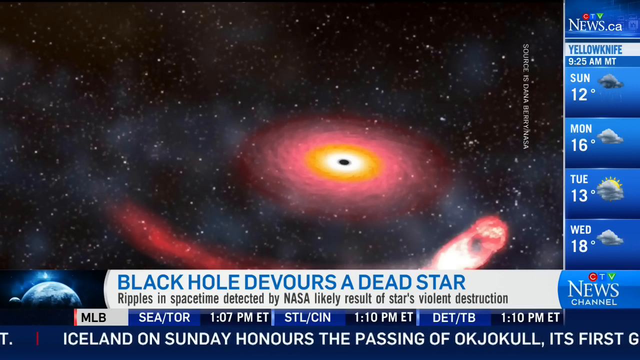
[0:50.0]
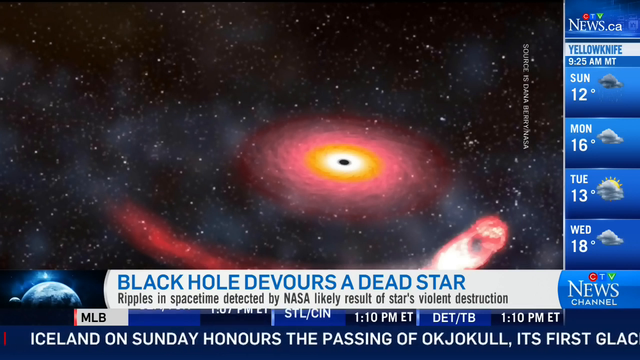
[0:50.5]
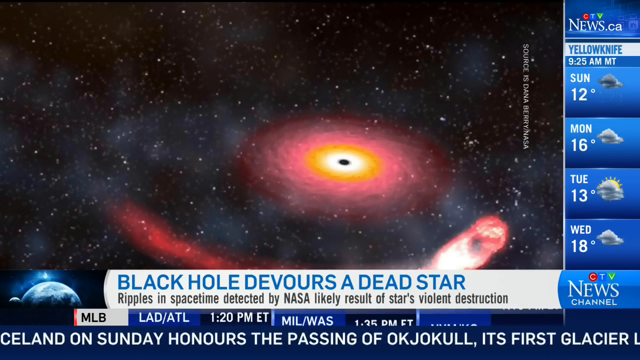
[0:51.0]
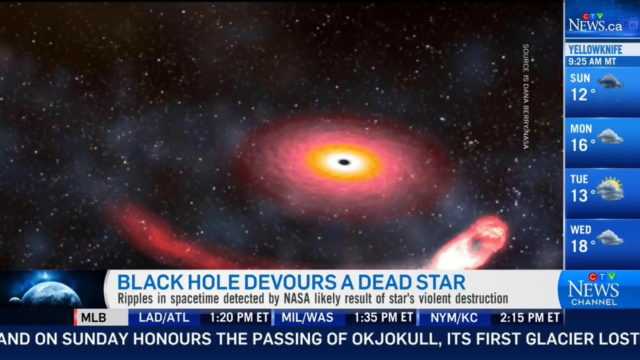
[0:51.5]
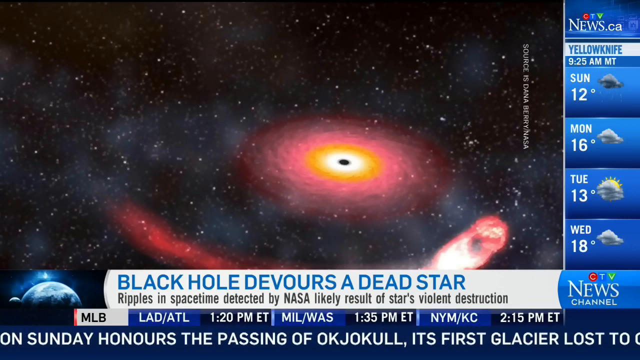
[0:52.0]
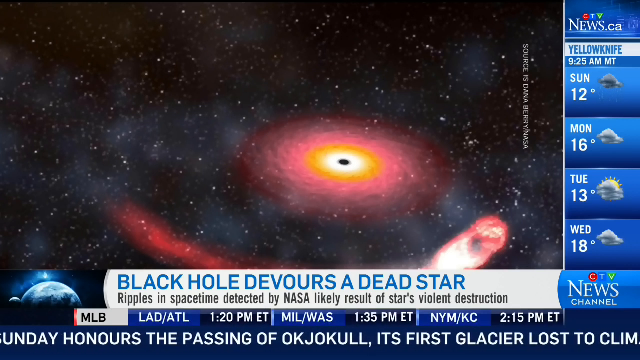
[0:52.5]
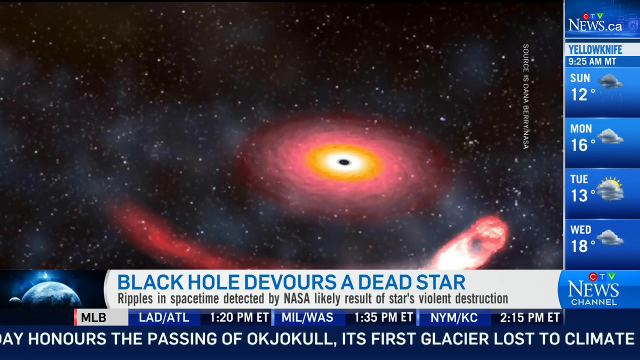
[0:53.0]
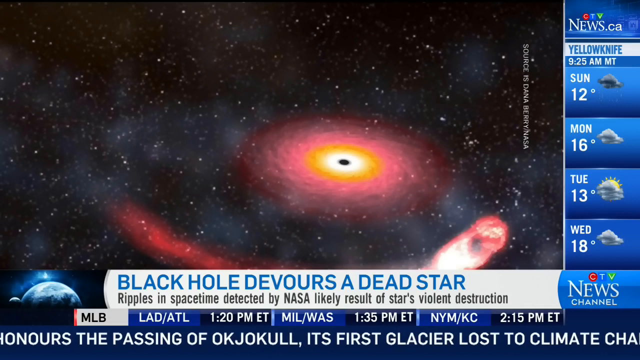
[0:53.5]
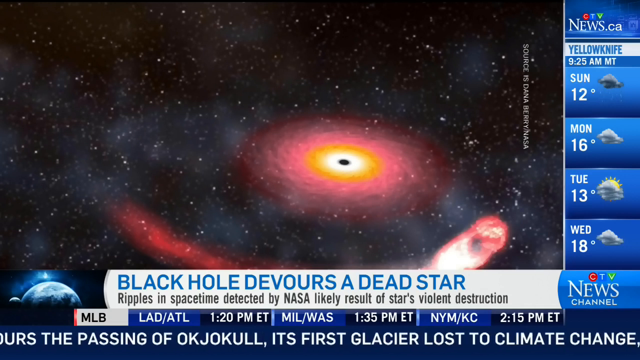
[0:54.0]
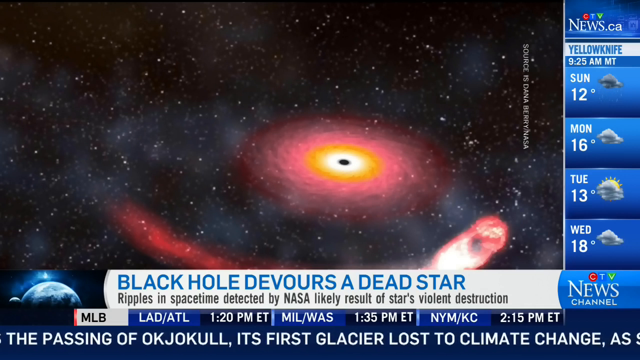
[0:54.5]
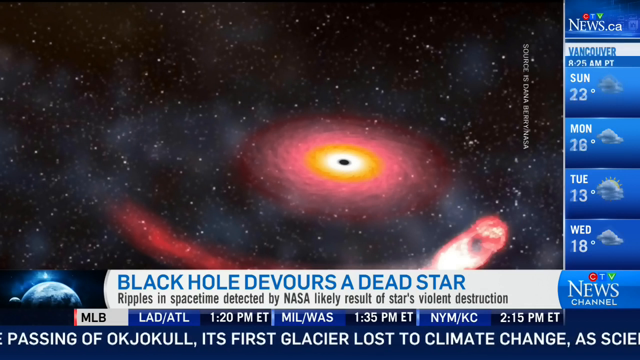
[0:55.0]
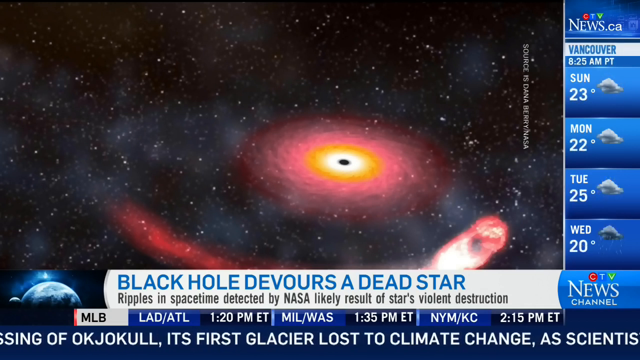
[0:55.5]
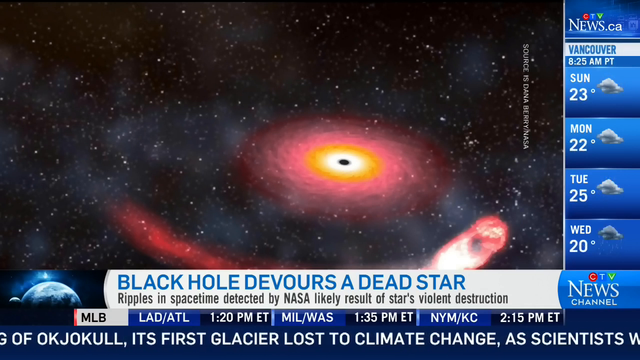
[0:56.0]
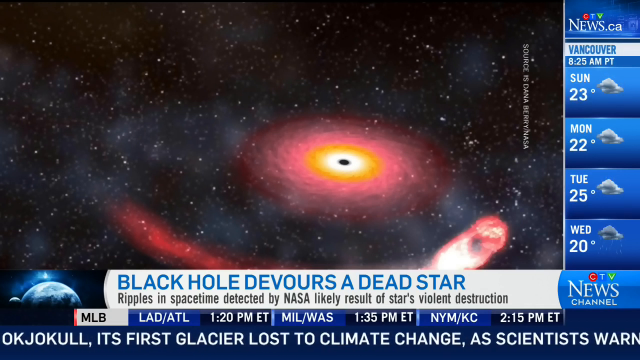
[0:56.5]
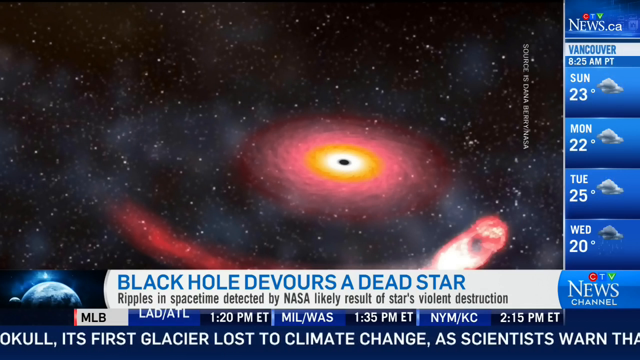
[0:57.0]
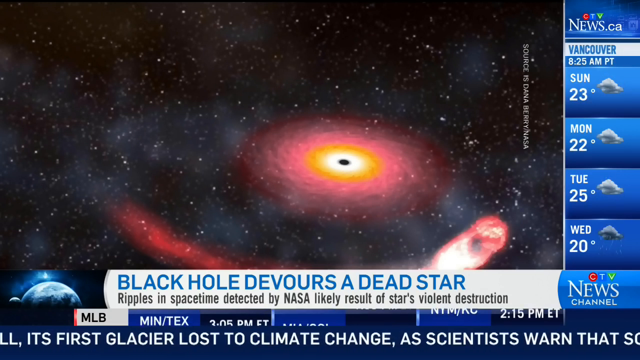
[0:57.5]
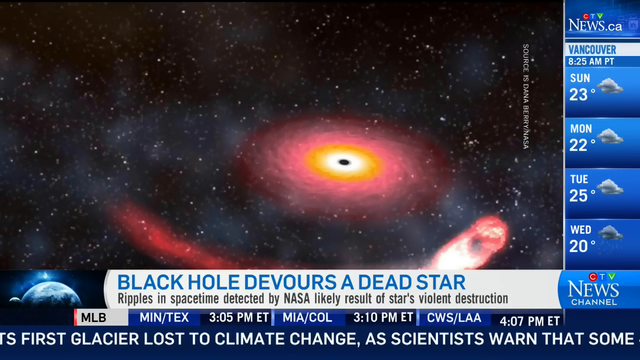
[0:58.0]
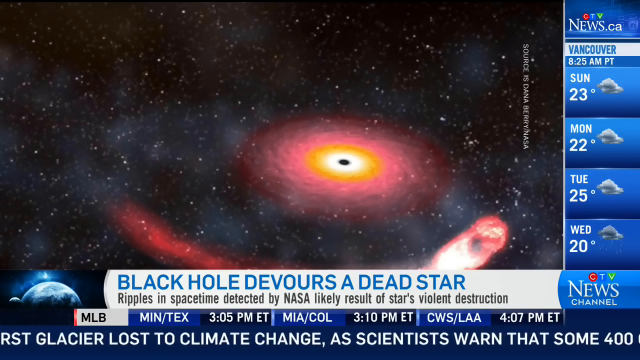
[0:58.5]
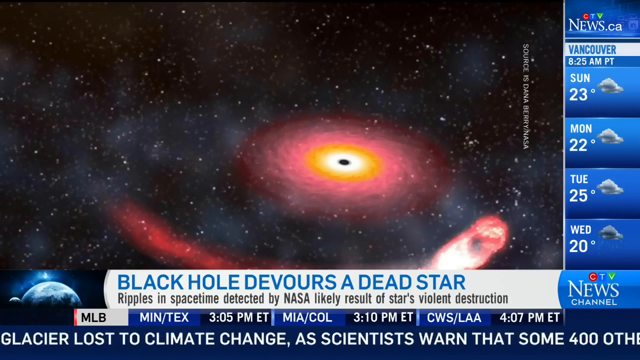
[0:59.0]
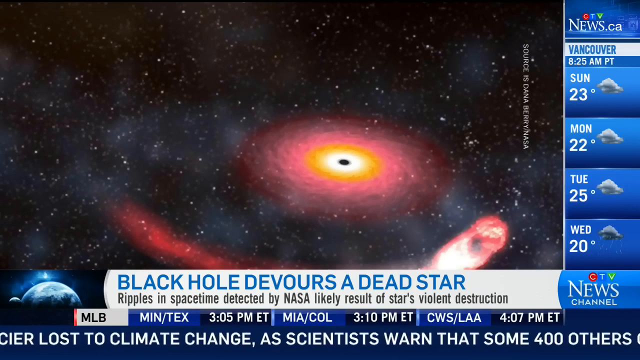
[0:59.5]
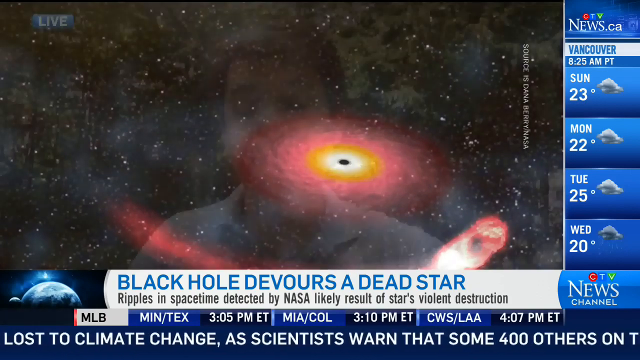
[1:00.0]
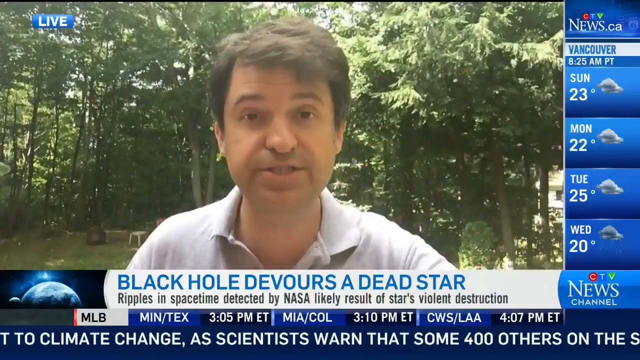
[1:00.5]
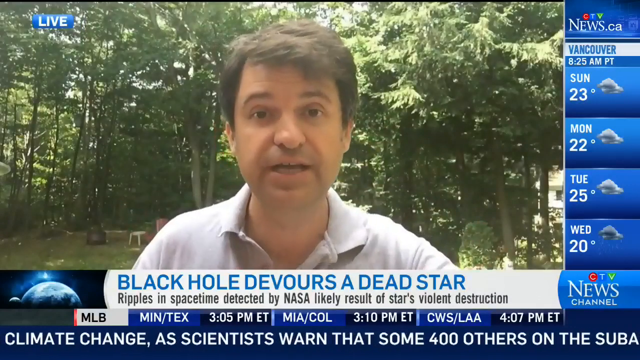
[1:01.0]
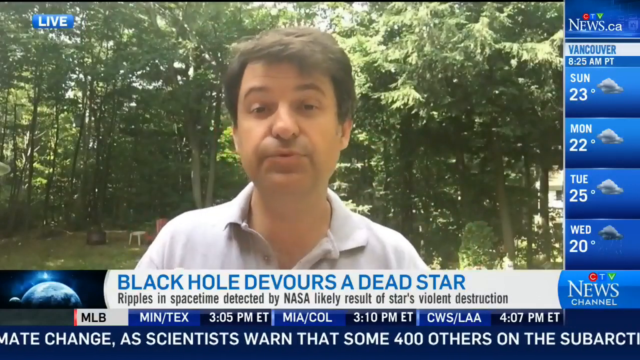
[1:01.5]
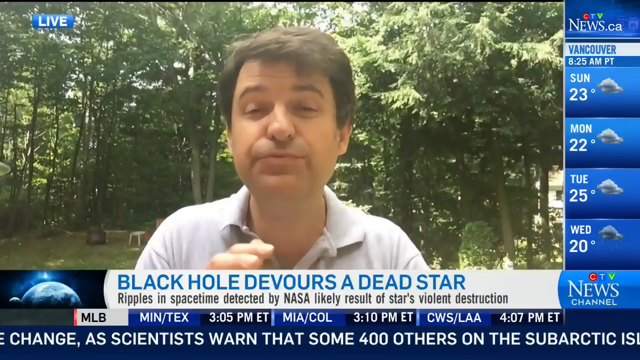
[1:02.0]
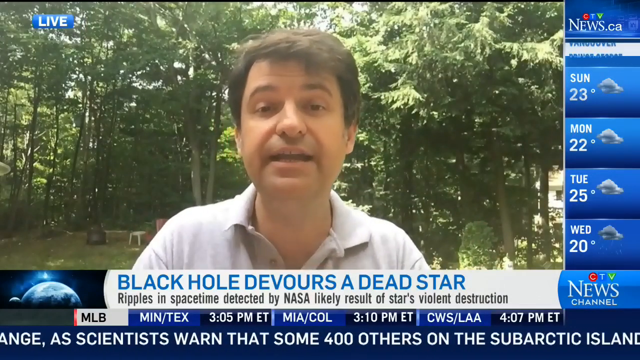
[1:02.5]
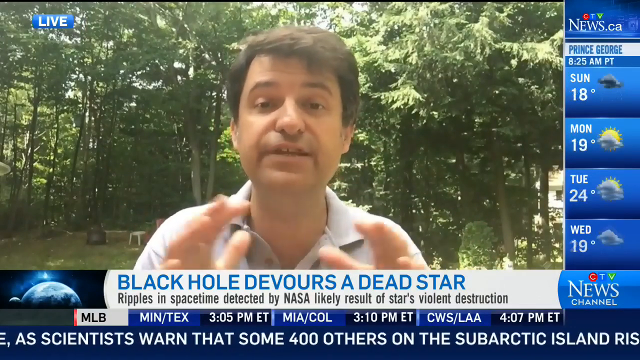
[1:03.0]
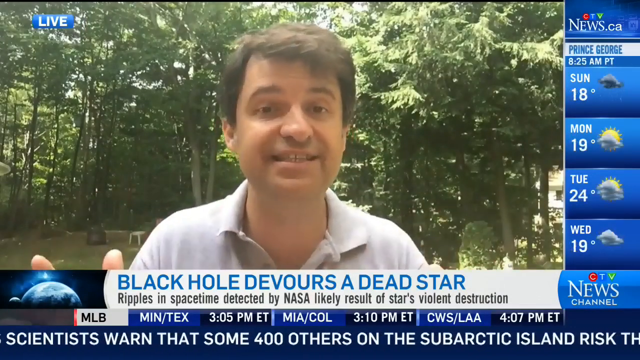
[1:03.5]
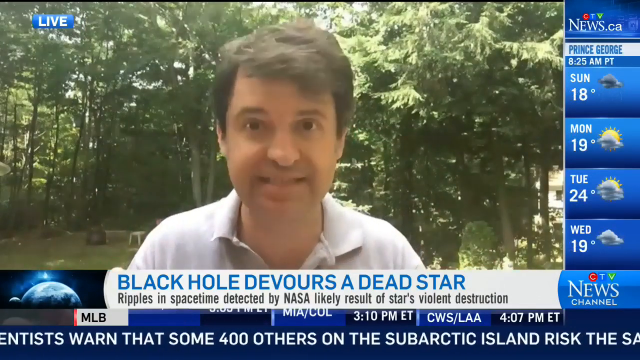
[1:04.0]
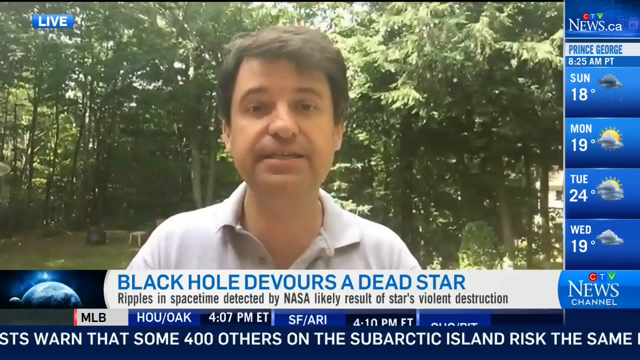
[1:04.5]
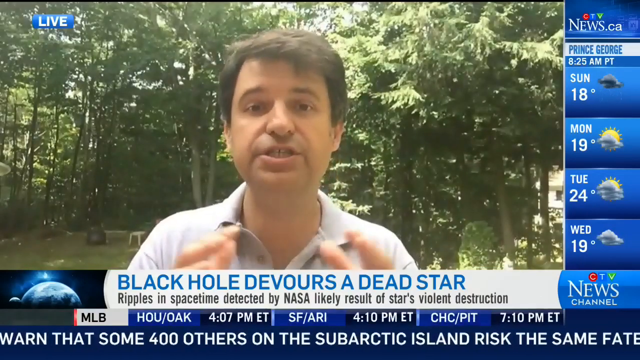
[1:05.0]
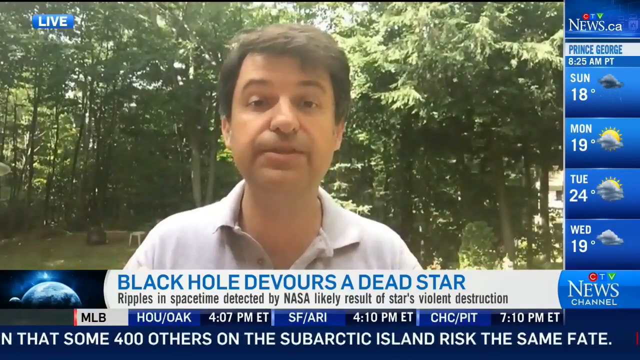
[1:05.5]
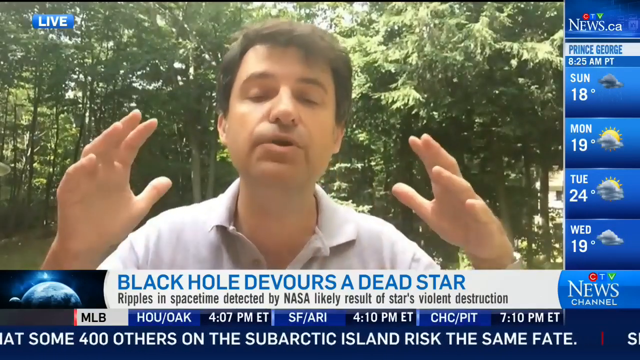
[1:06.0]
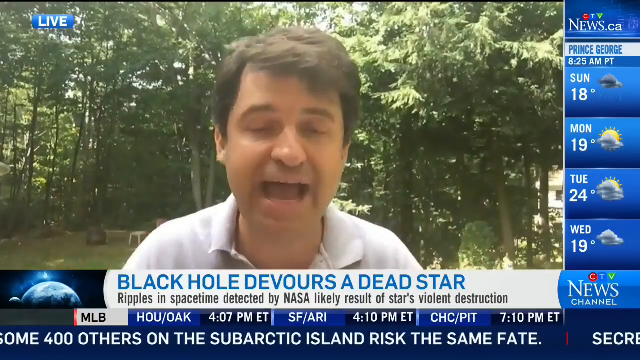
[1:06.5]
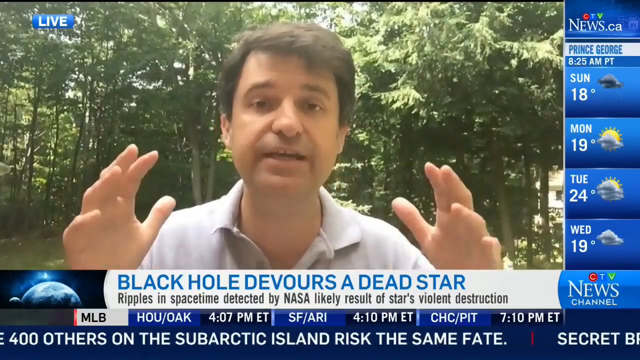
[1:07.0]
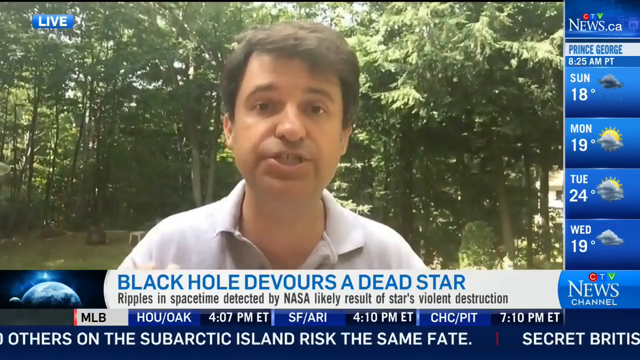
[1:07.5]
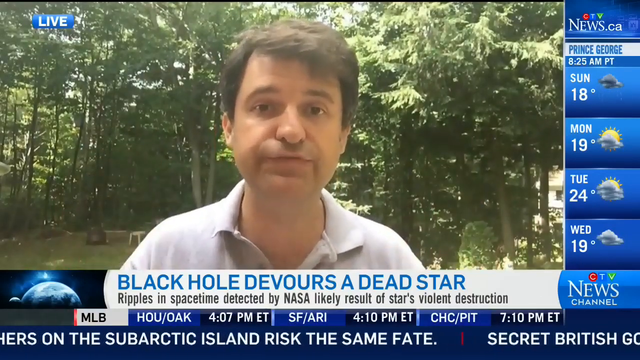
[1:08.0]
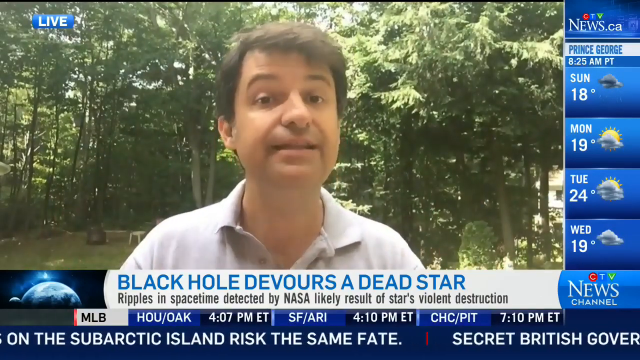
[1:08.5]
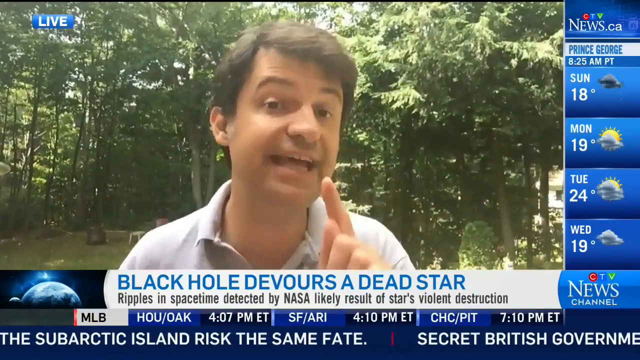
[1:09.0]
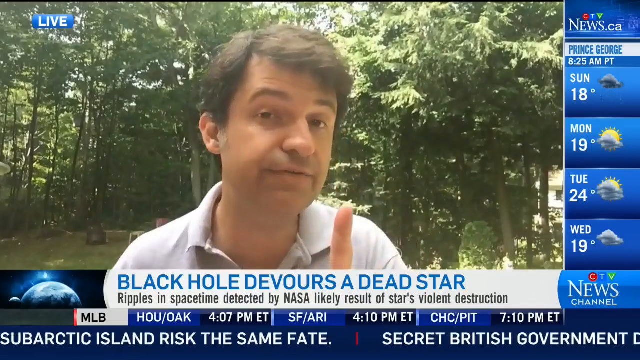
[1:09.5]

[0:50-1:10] The expert keeps talking, moving his hands up and down, then points with his finger as if indicating what seems to be number one or a first step, and then opens his hands as he explains. The ticker at the bottom of the screen shows other news of the day, including "its first glacier lost to climate changes, as scientists warn that some 400 others on the sub-Arctic island risk the same fate."